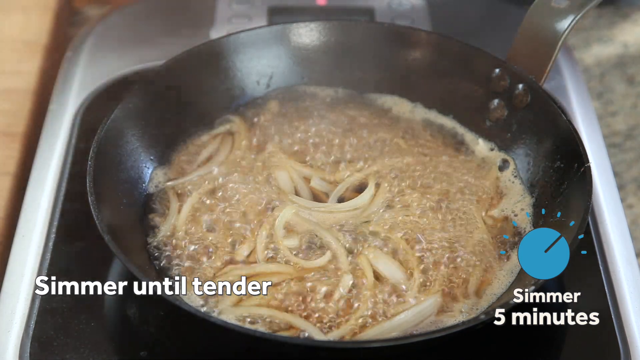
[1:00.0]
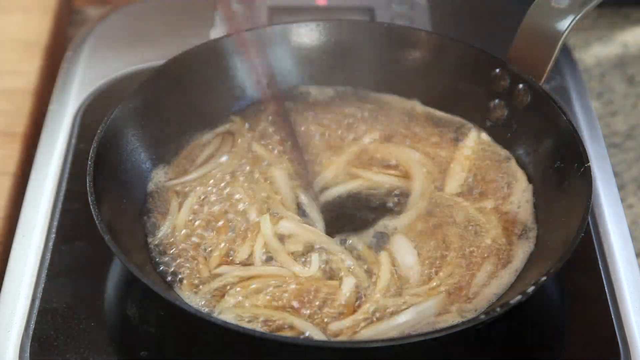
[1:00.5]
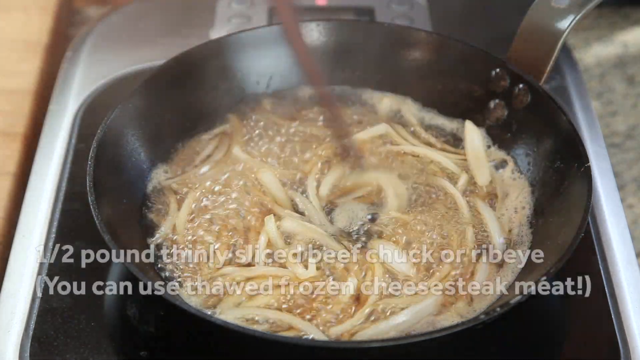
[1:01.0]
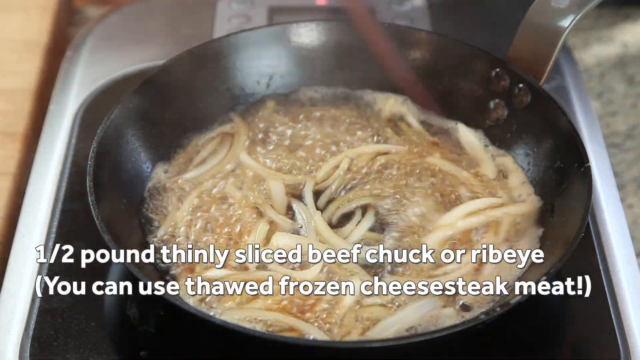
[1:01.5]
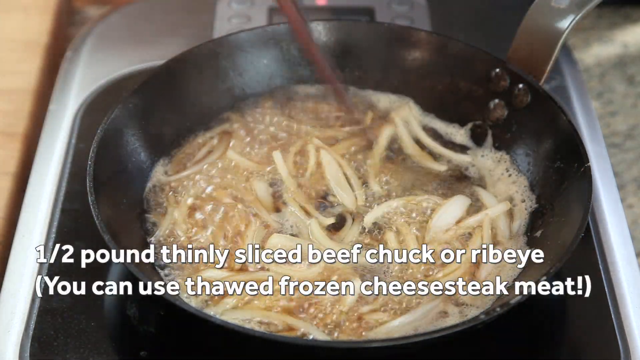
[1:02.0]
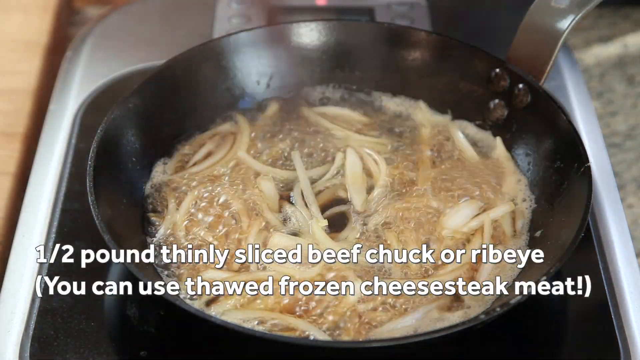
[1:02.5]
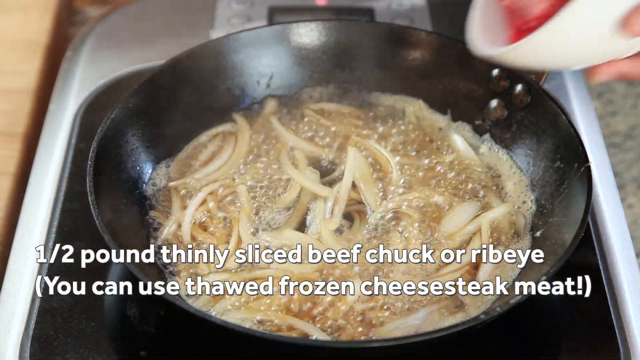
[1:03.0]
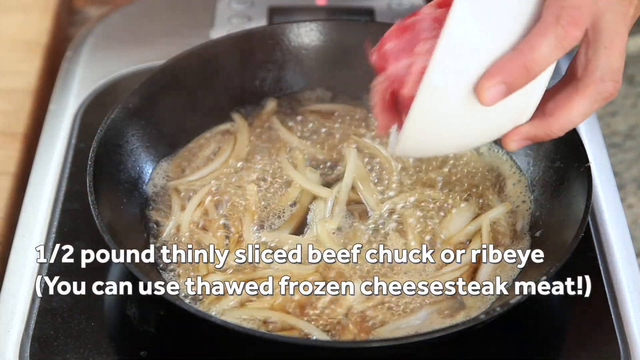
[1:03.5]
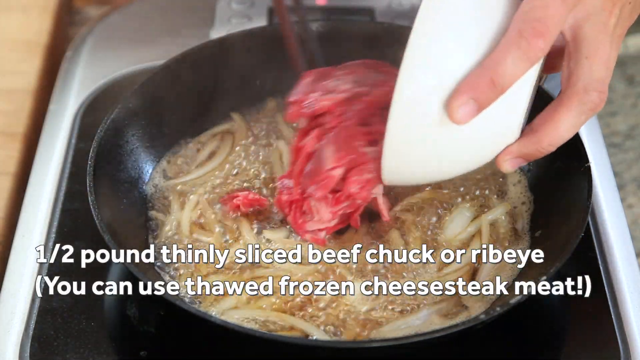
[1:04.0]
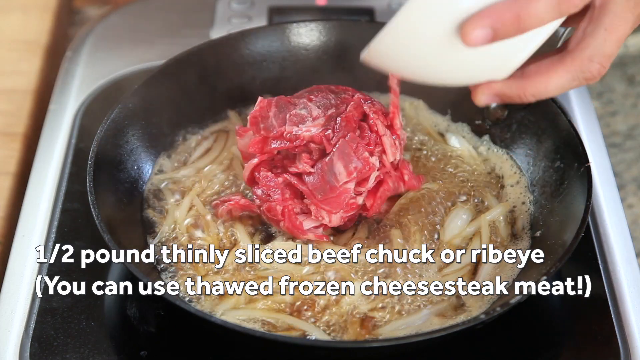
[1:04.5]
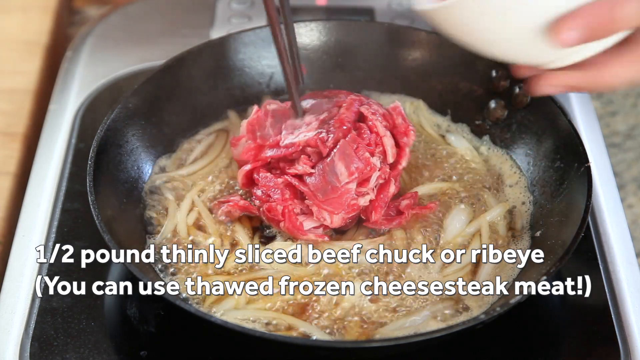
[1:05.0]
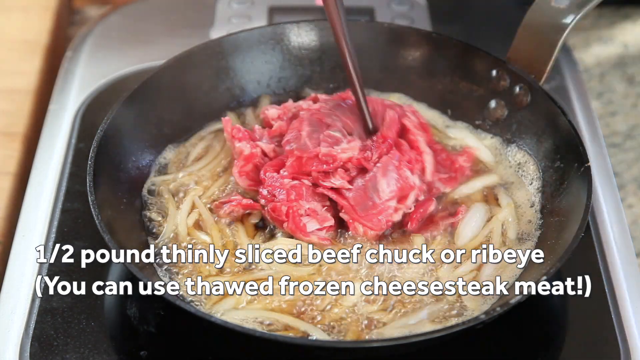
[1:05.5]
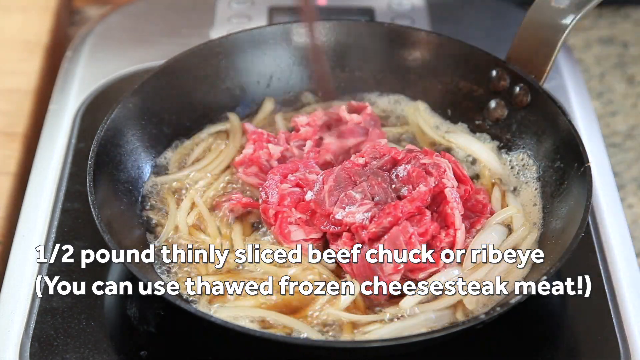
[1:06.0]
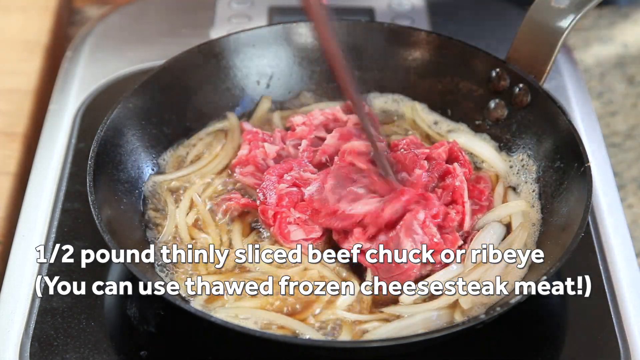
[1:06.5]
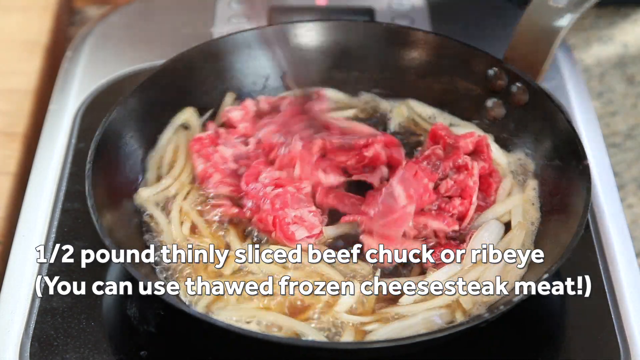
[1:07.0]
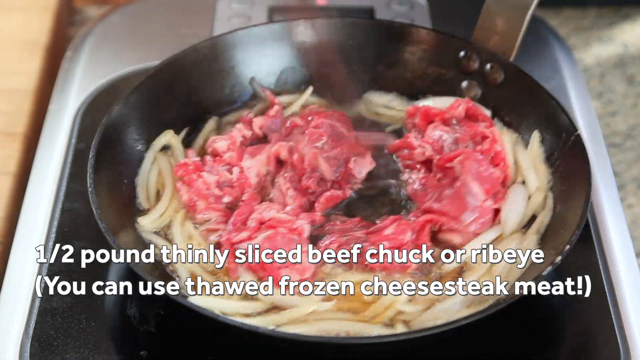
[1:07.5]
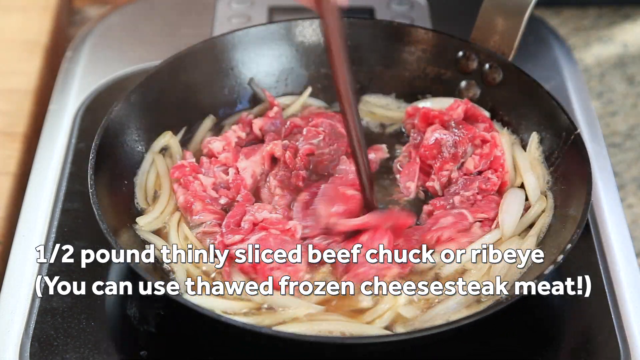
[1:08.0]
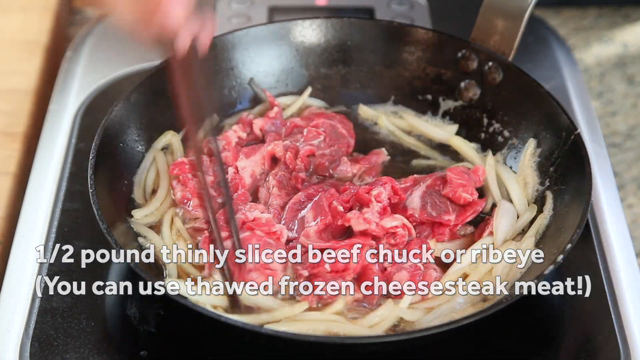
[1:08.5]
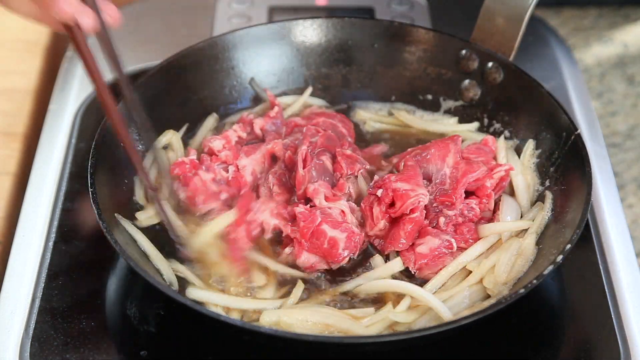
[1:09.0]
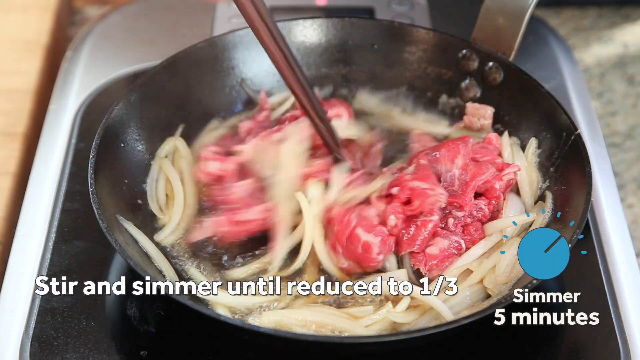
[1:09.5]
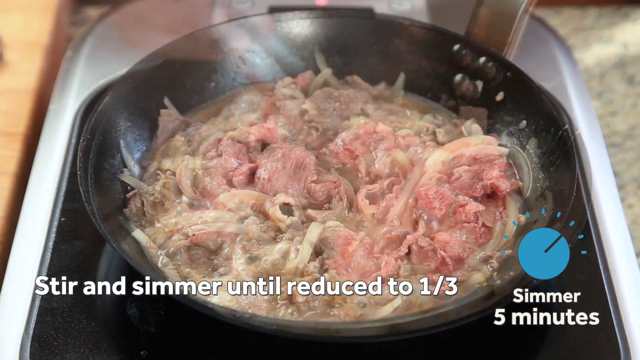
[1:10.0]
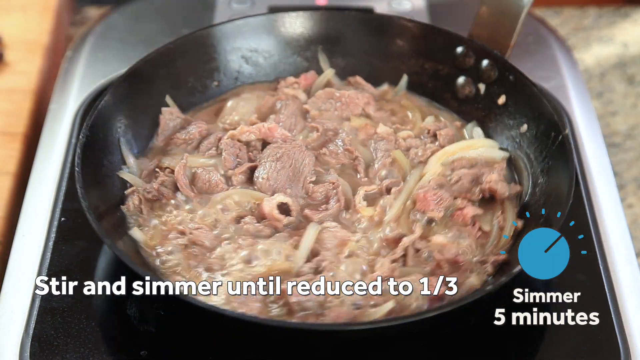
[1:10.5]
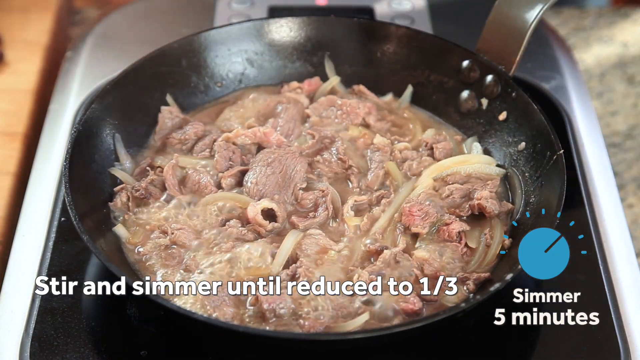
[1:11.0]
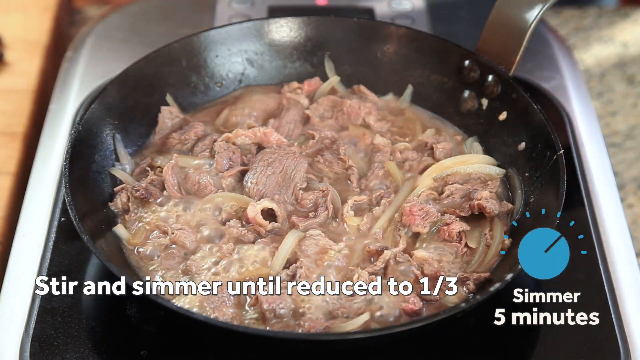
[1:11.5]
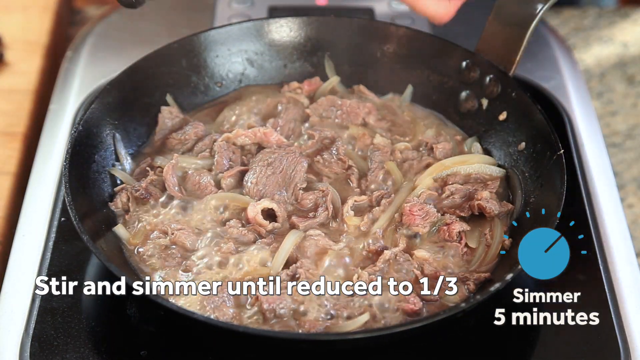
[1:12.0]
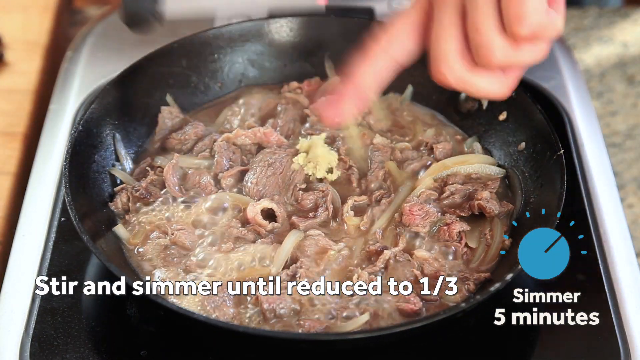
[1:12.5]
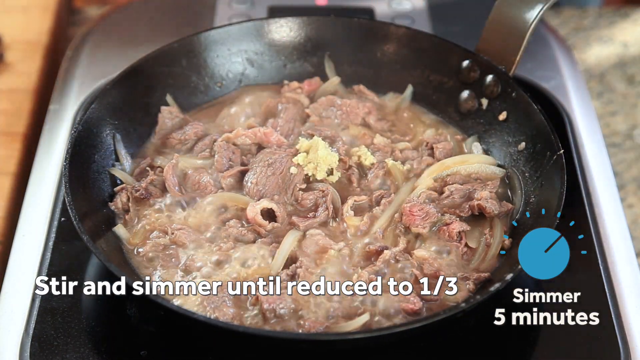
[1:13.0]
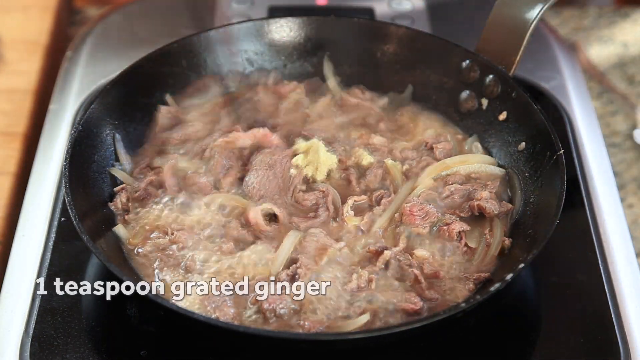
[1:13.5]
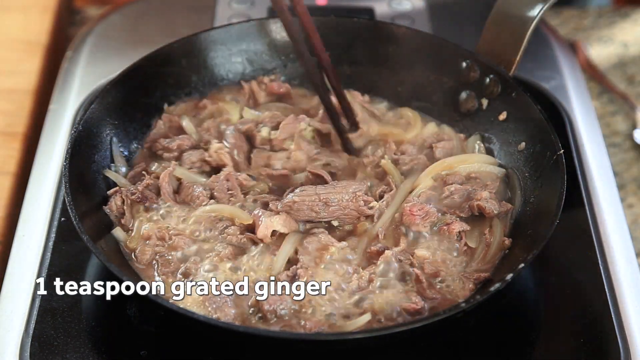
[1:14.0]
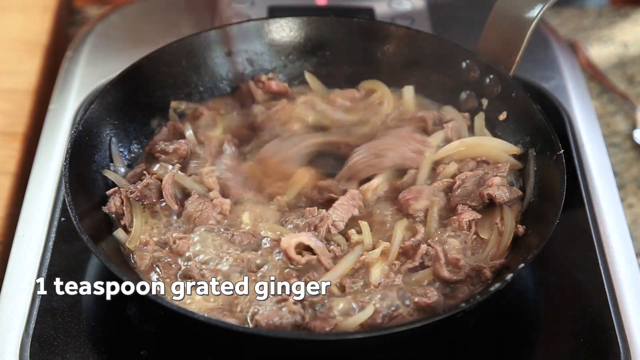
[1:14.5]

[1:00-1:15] The ingredients in the pan bubble and simmer, with the white text "simmer until tender" still on the screen. It cuts to very dark brown wooden chopsticks stirring the onions and the liquid around the pan. White text at the bottom of the screen reads "1/2 pound thinly sliced beef chuck or ribeye (you can use thawed frozen cheesesteak meat)". Thinly sliced raw meat is pushed from a white bowl into the pan with the chopsticks. After the beef goes in, the text reads "stir and simmer until reduced to one third". At the very end, what looks like minced garlic or ginger is put in. The chef is not seen, only parts of his hand and fingers; the camera stays close up on the contents of the pan.